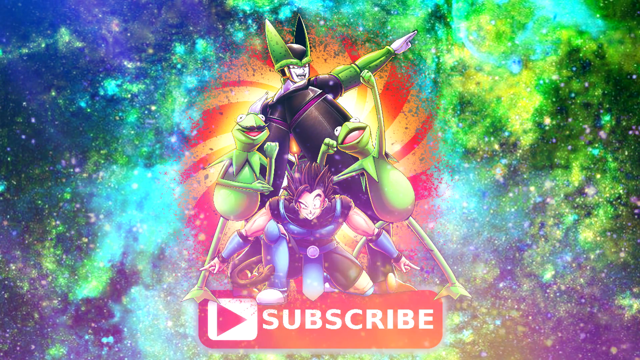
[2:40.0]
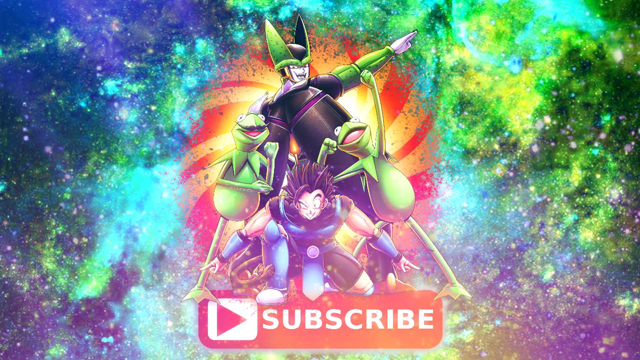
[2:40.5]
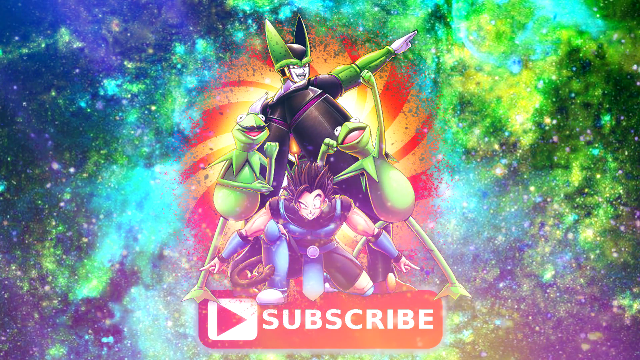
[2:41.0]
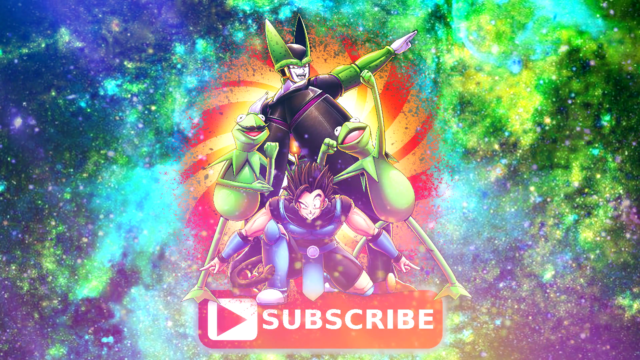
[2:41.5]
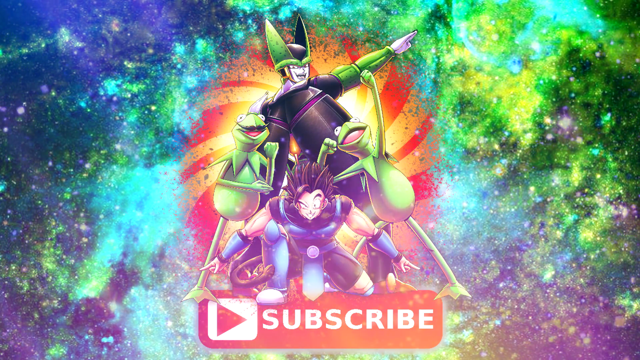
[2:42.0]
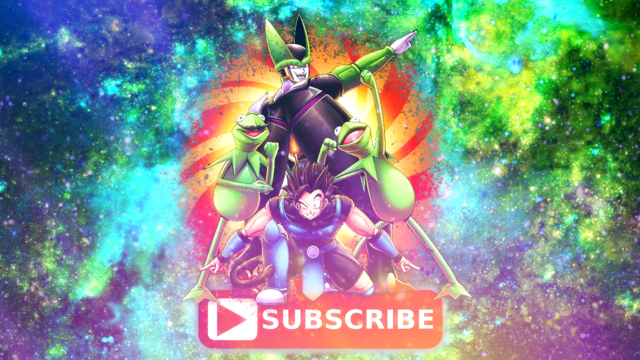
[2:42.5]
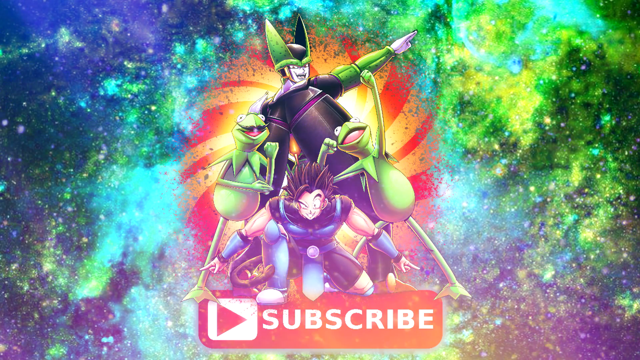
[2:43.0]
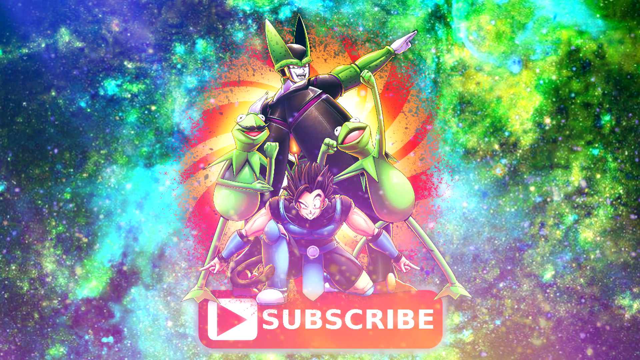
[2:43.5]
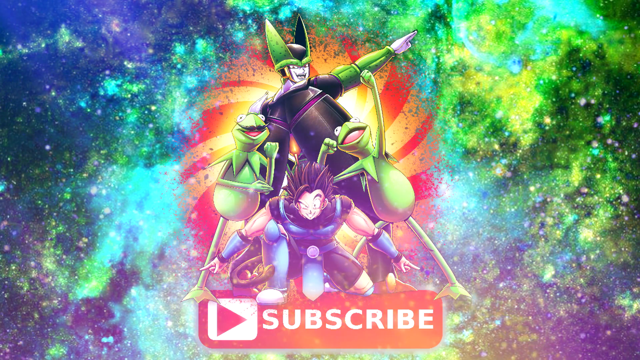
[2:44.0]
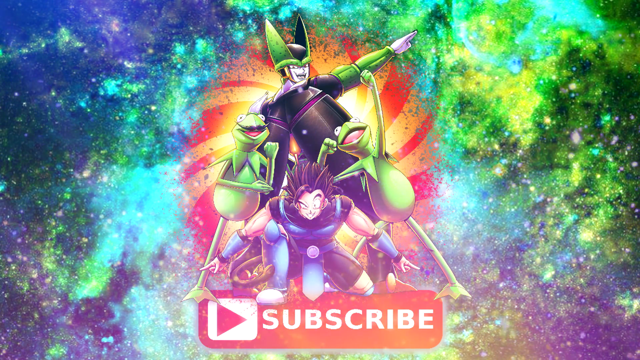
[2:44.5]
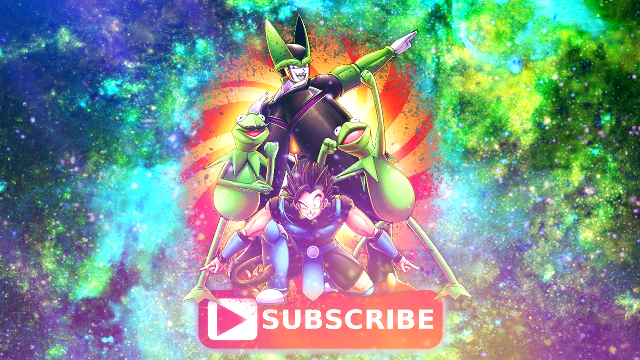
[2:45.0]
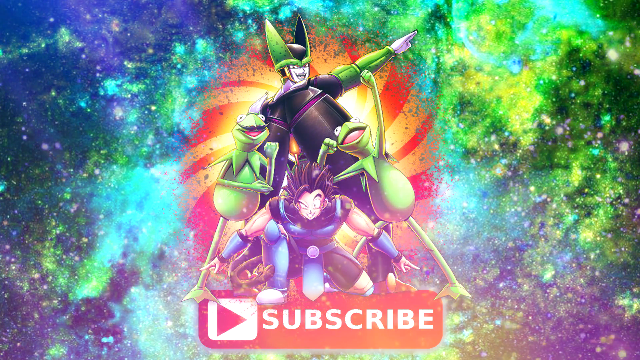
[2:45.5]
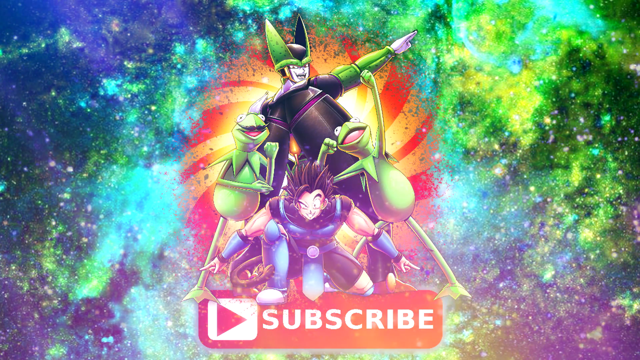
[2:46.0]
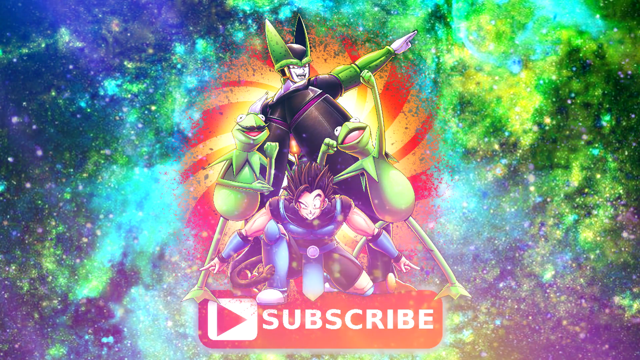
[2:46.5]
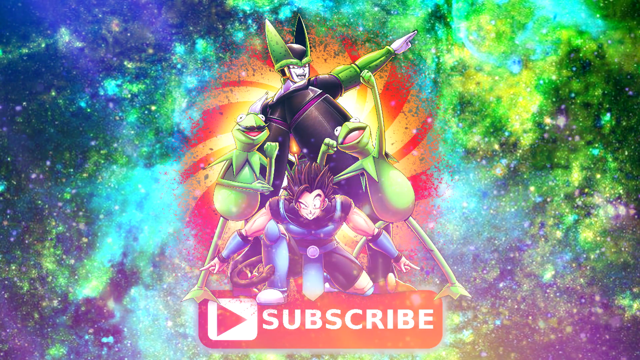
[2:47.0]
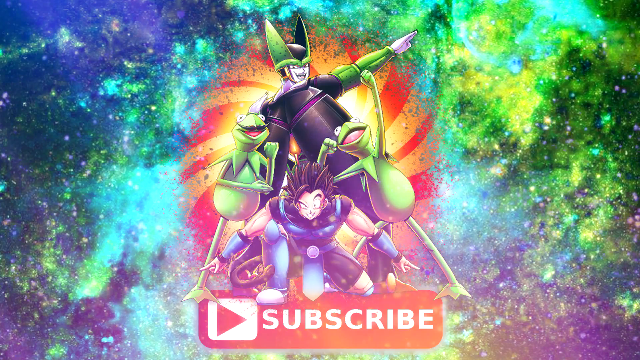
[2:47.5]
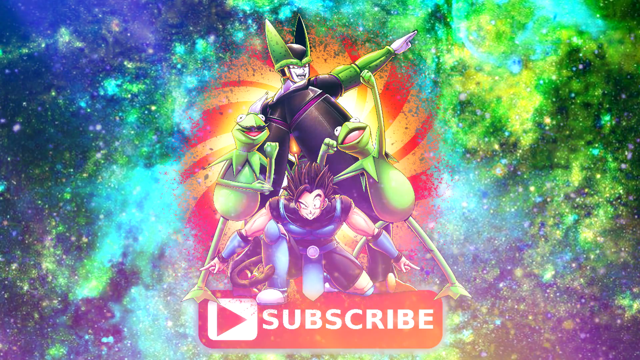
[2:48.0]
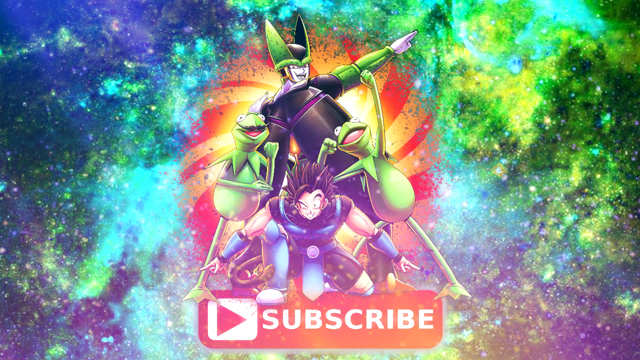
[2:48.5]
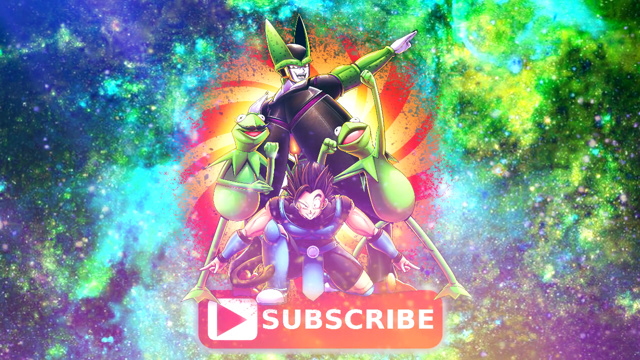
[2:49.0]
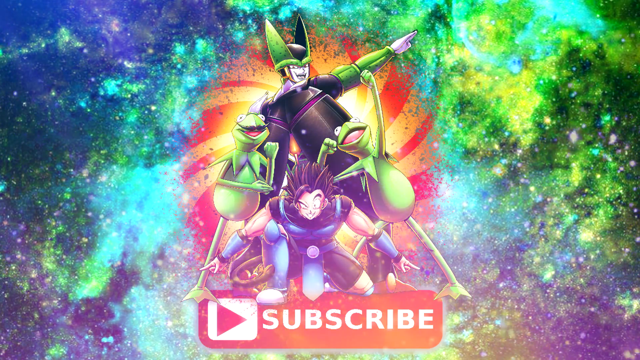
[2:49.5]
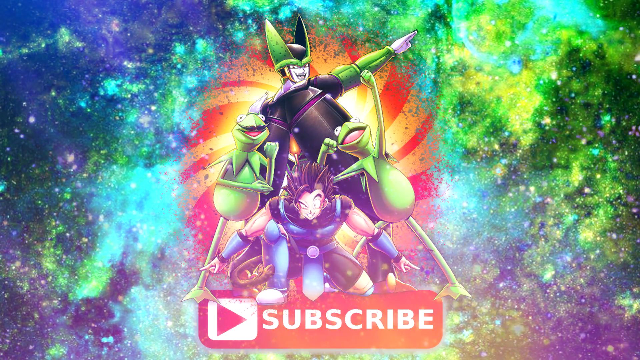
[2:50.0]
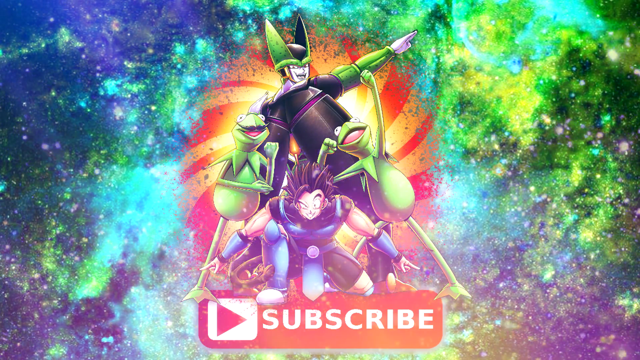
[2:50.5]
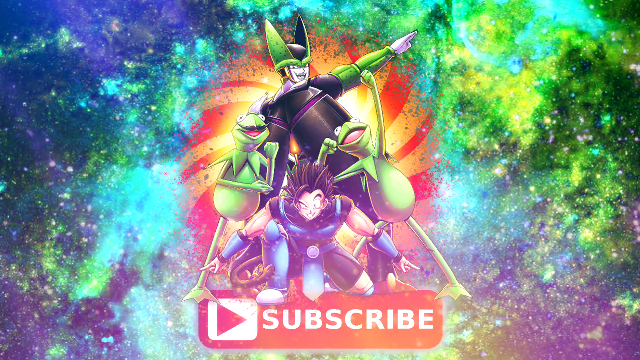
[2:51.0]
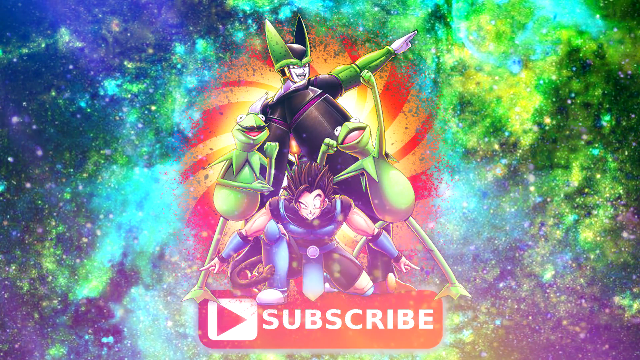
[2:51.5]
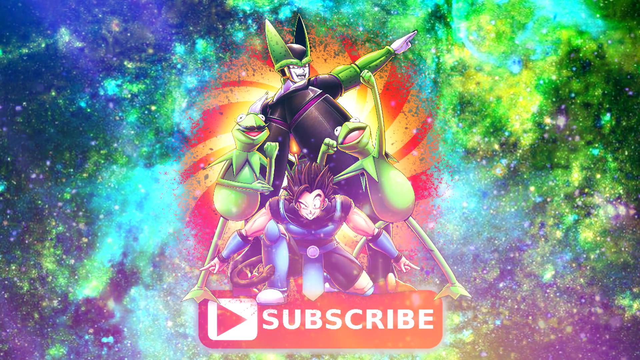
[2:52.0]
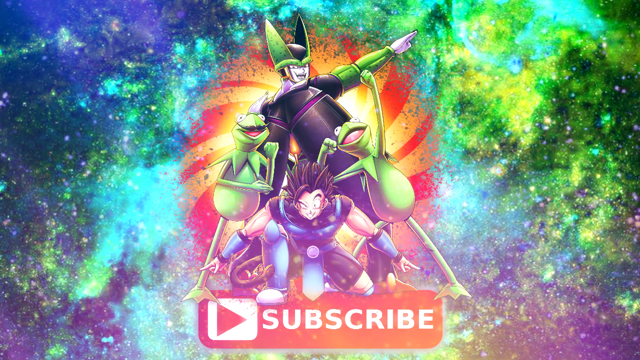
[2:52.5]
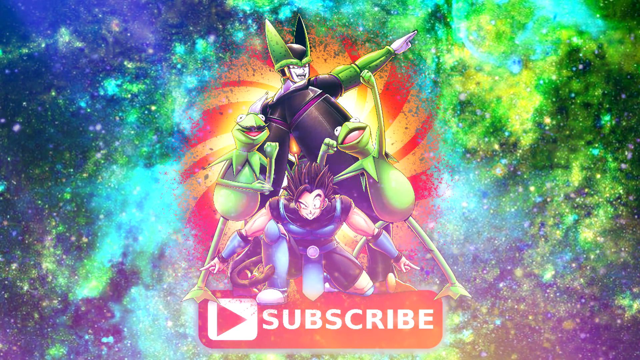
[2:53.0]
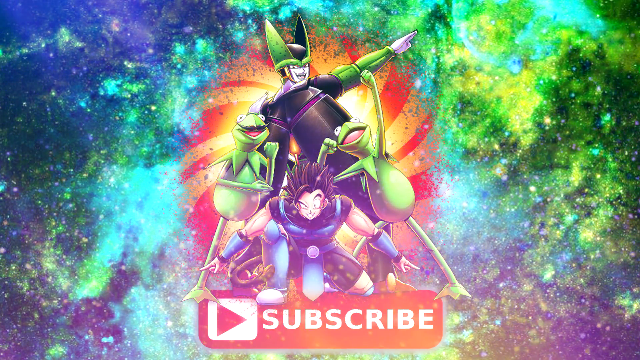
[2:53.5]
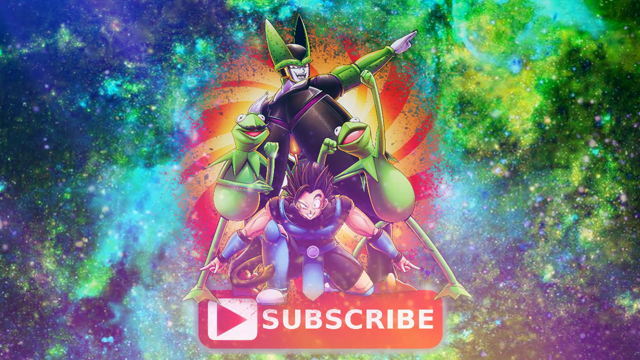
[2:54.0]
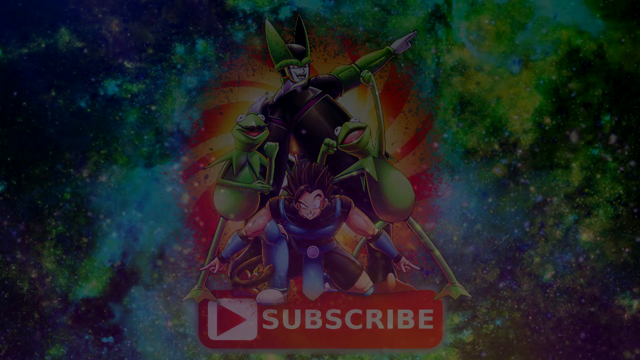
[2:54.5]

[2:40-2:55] The page says "subscribe" and shows two pictures of Kermit the Frog, which appear to be paired with Goku and, apparently, Cell from Dragon Ball Z beneath them. A big red square says "subscribe", and the YouTube logo is shown. The characters are in outer space, coming through a portal in green, purple, blue and turquoise colors, with billions of stars in the background surrounding them as they come through a red-yellowish sunburst portal. The Cell character points upward at an angle, and the characters look like they are celebrating. One of the Kermits has a mustache, like an evil twin. The Goku character is down on the ground with his knees bent, gazing forward.